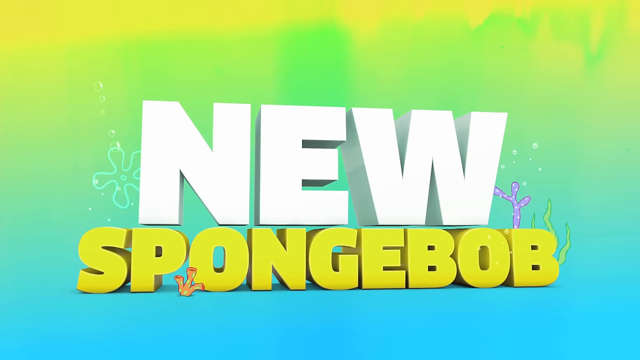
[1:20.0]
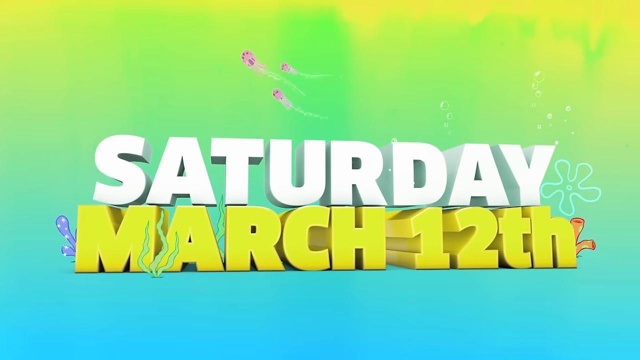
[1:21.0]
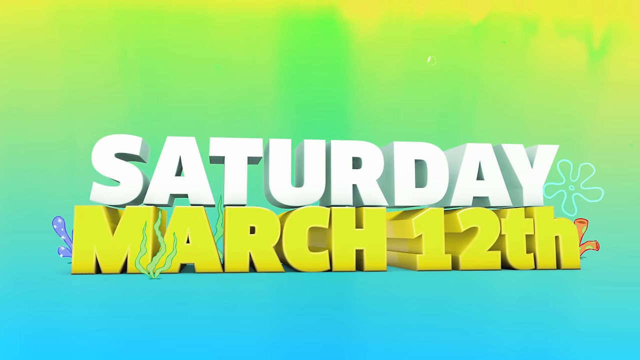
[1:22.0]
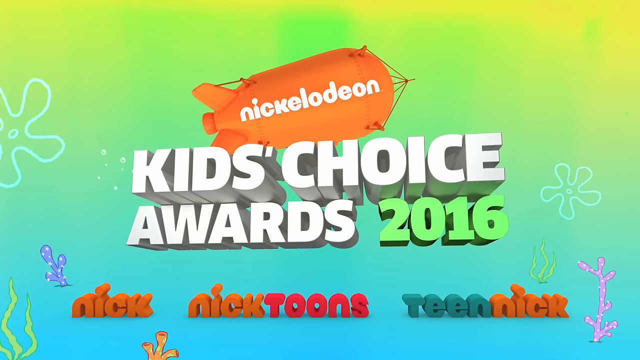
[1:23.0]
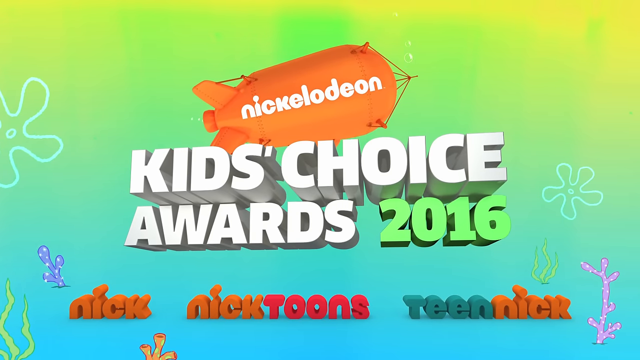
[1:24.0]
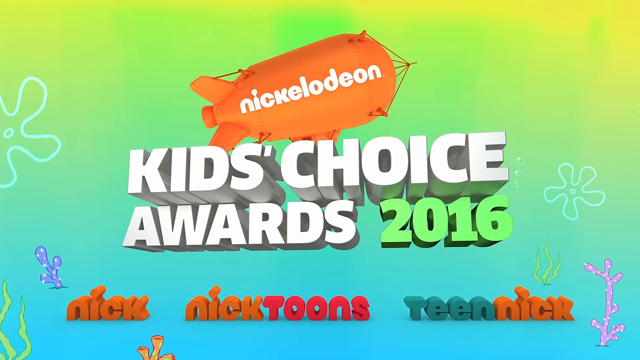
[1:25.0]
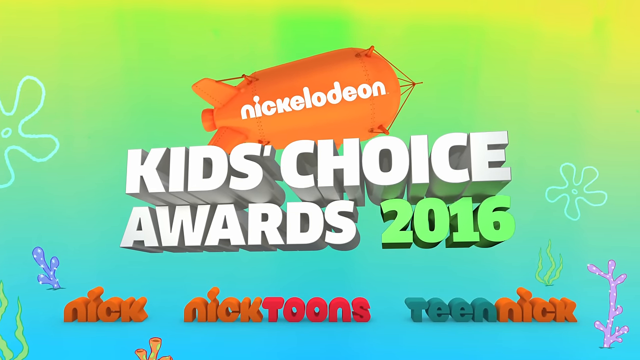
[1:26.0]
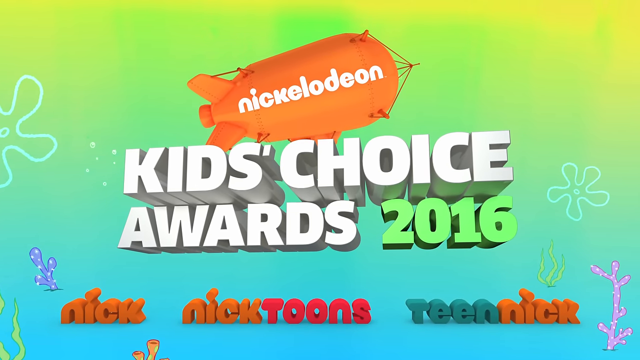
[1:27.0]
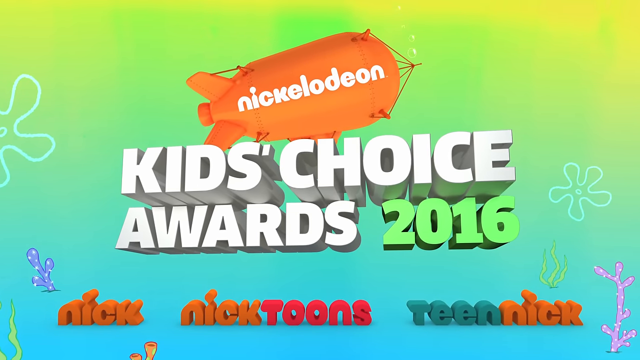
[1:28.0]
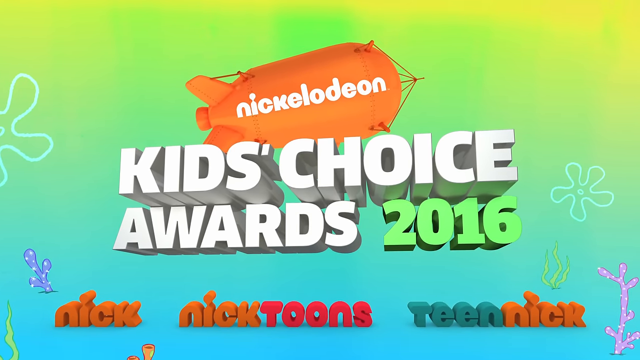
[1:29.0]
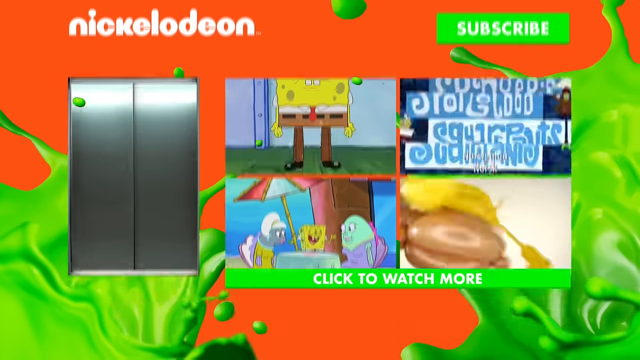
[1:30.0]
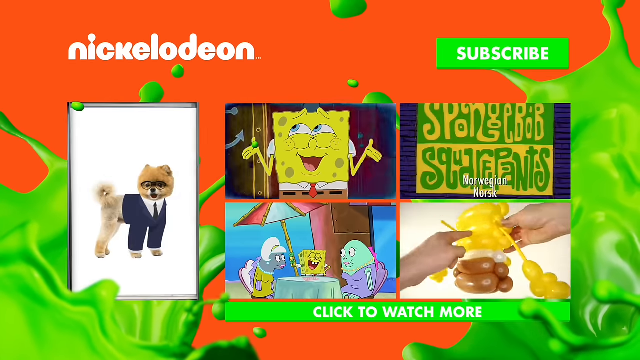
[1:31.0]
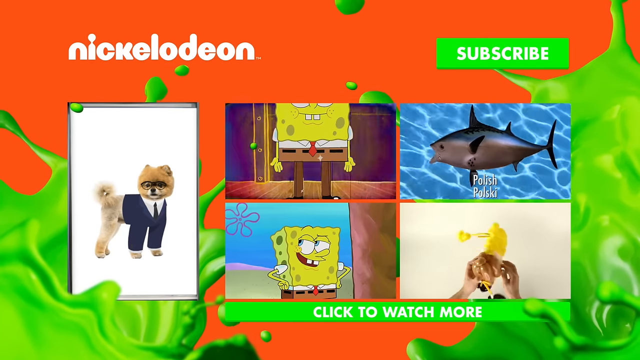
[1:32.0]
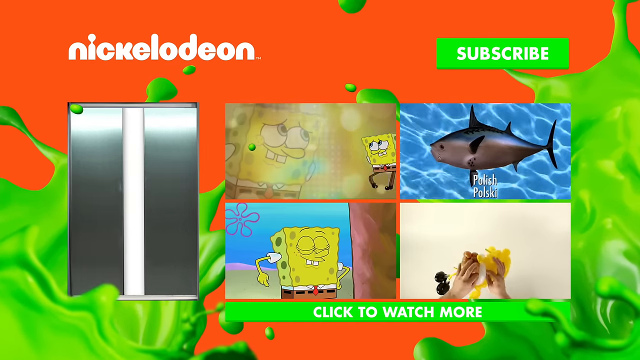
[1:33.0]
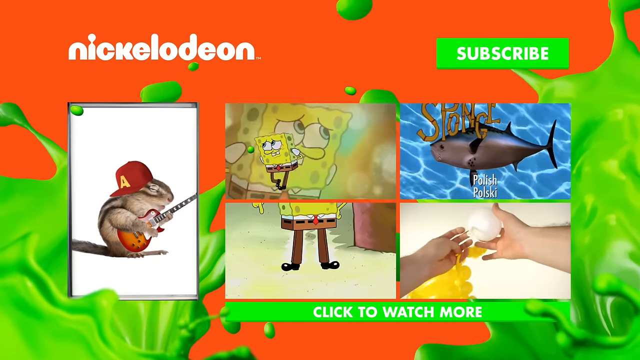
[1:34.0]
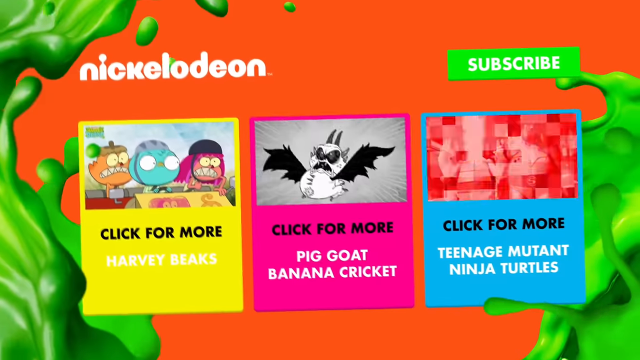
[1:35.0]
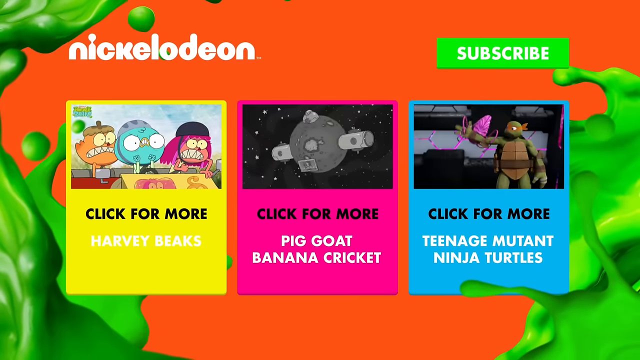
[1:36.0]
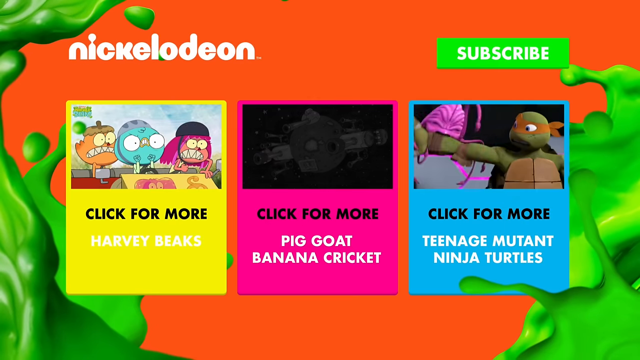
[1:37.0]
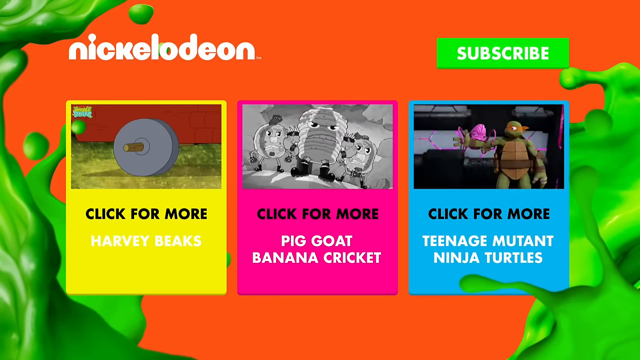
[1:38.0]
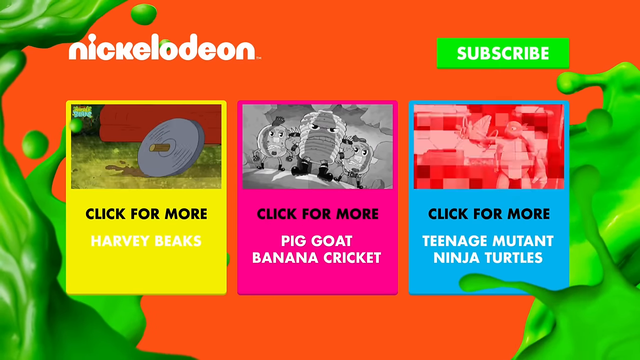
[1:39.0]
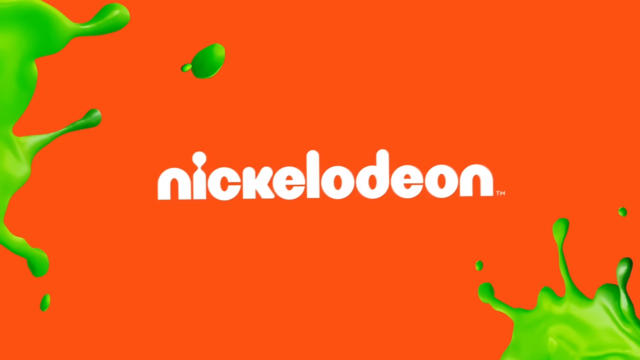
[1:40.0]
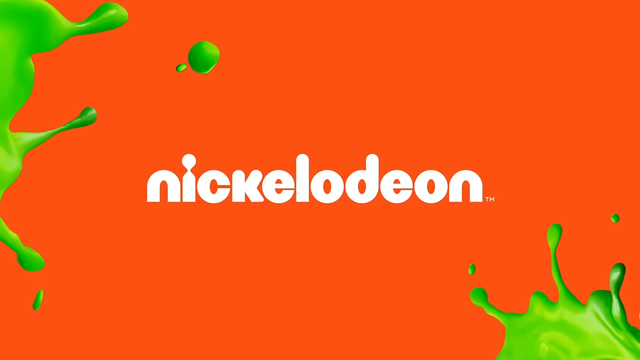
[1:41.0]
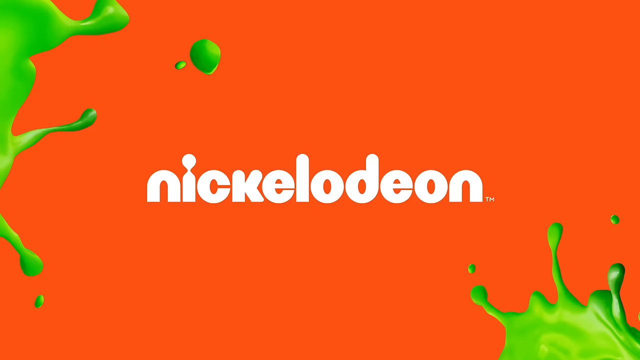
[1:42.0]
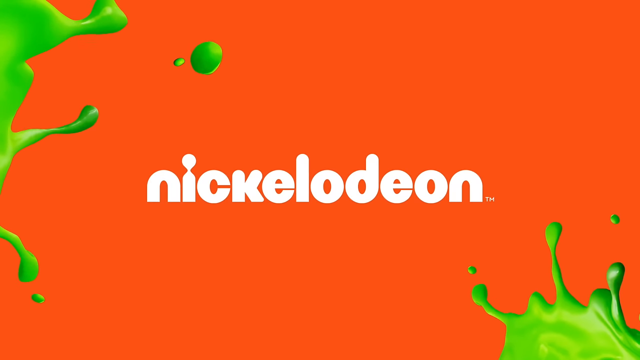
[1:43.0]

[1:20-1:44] Against a coral background, the words "New Spongebob" appear, "New" in white with "Spongebob" in yellow beneath it. Another screen with the same background shows "Saturday" written in white on top and "March 12th" in yellow underneath. Next, the Nickelodeon logo appears on the side of the submarine, with "Kids Choice Awards 2016" written underneath, the "2016" in green, and below that logos for Nick, Nick tunes and Tin Nick. The coral background is still evident, with the top half of the screen cloud in yellow and green and the bottom in blue. Splashes of slime come from the bottom of the screen as a transition, after which different videos emerge from the bottom. On the left, an elevator door opens to show a cat inside wearing a business suit. On the right are four videos arranged in a square: one shows SpongeBob, another shows the SpongeBob SquarePants sign with a Norwegian mask, the bottom left shows SpongeBob between two ladies at a dining table, and the bottom right shows a creature made from balloons. Beneath them is a sign to click to watch more, and above the square of videos is a sign to subscribe. Next, more shows that can be watched appear, such as Heavy Beaks, Pig, Goat, Banana, Cricket and Teenage Mutant Ninja Turtles. Finally, the Nickelodeon sign appears in white on an orange background with green slime in the top left and bottom right of the screen.